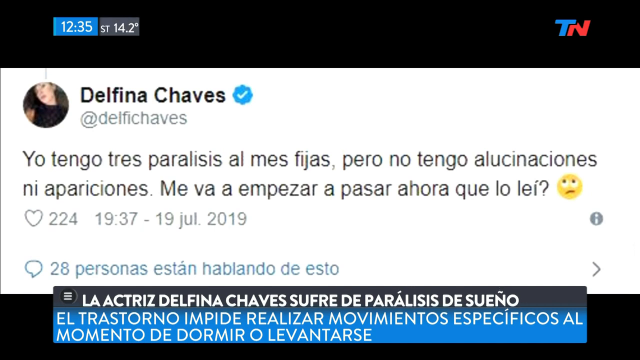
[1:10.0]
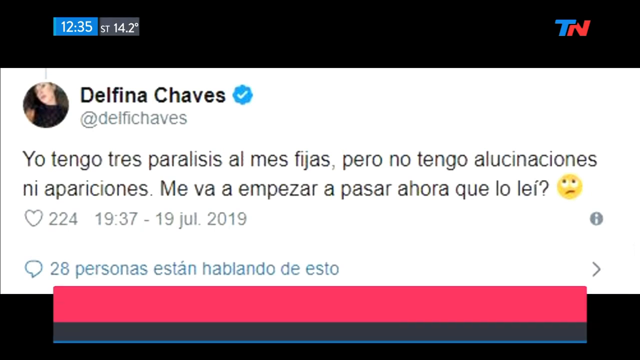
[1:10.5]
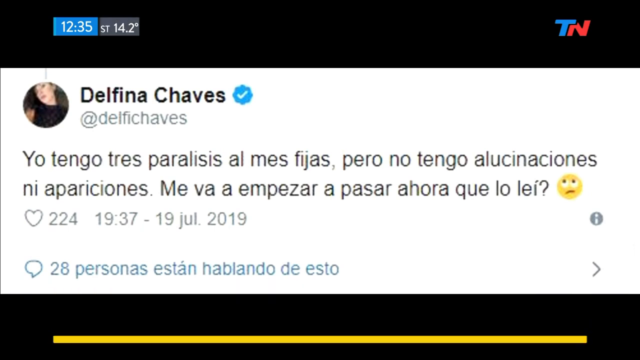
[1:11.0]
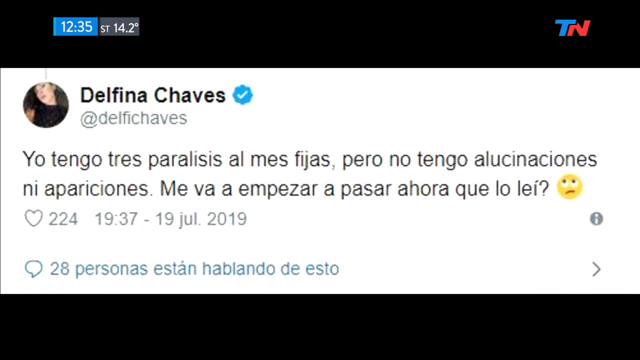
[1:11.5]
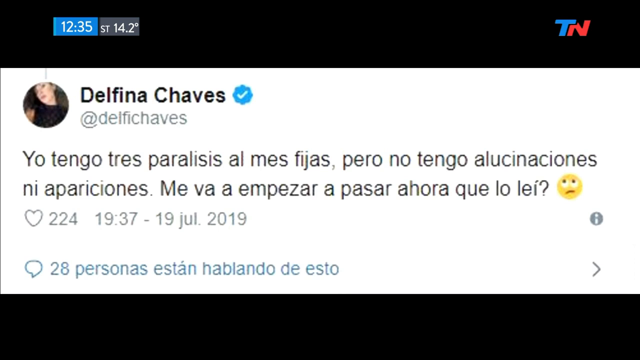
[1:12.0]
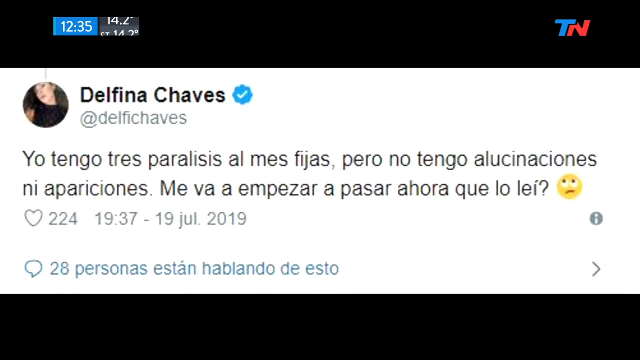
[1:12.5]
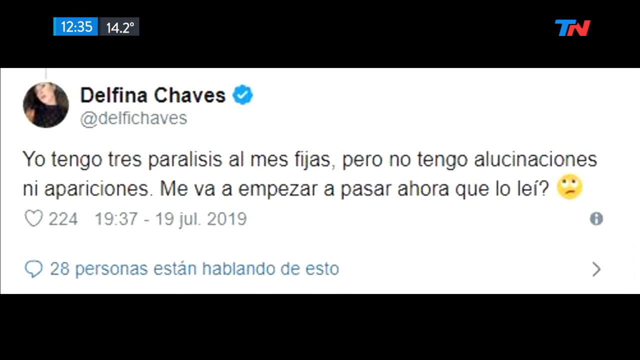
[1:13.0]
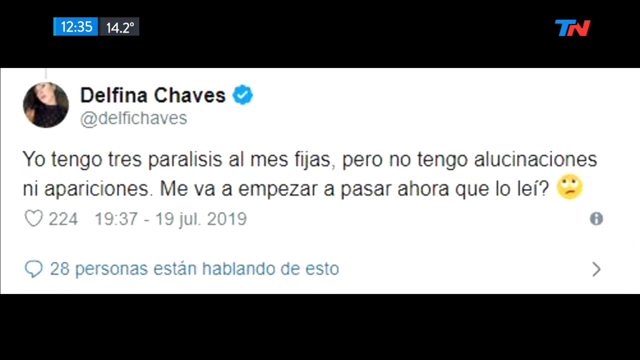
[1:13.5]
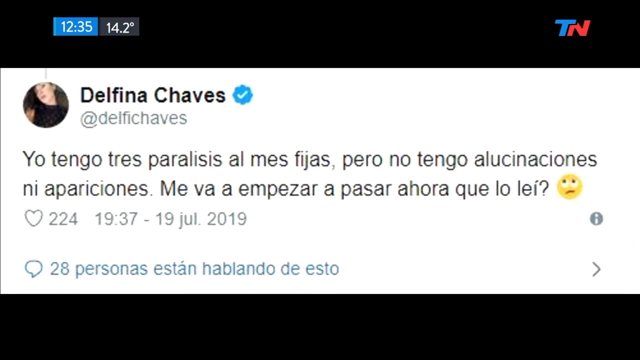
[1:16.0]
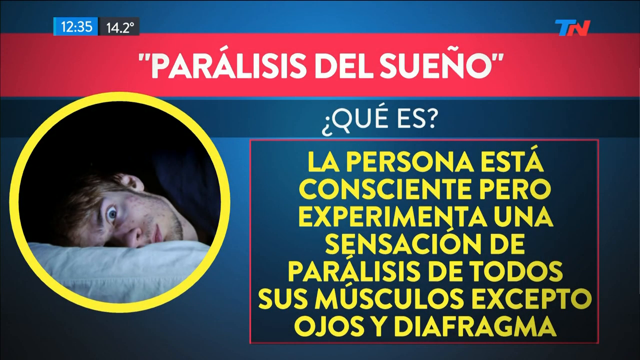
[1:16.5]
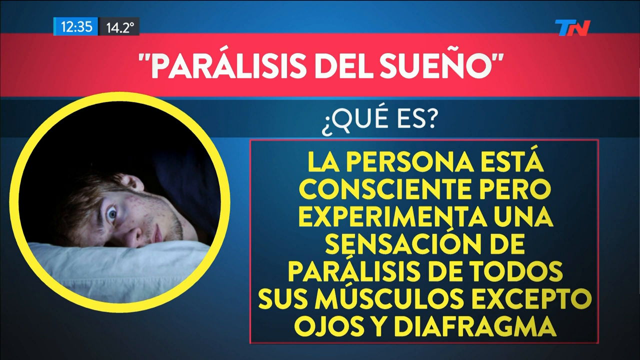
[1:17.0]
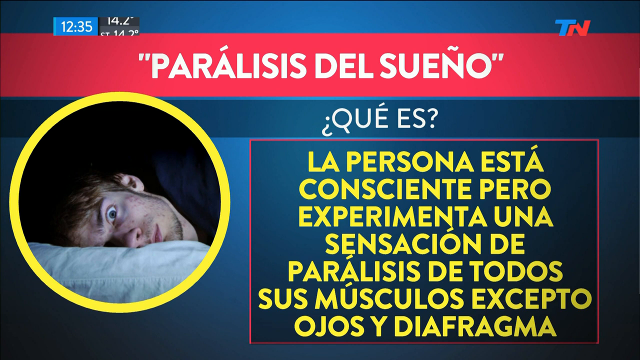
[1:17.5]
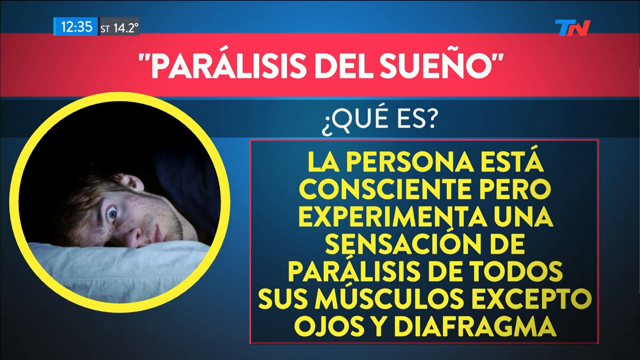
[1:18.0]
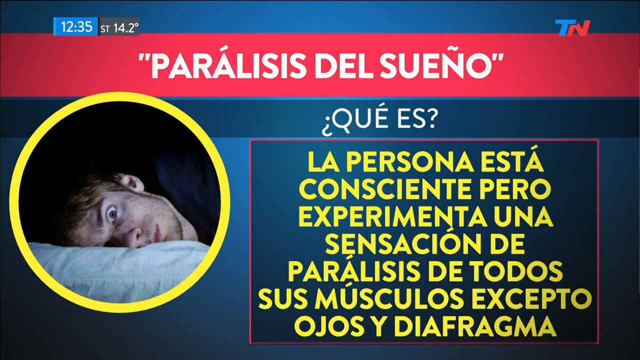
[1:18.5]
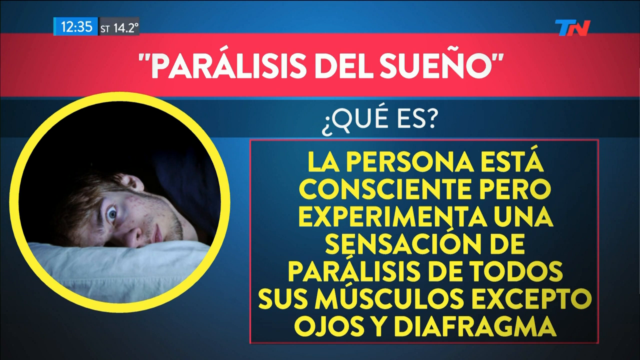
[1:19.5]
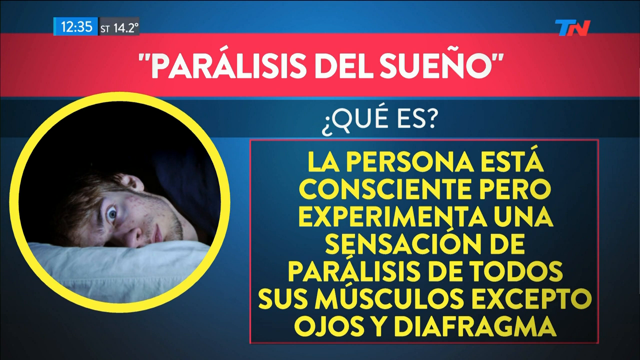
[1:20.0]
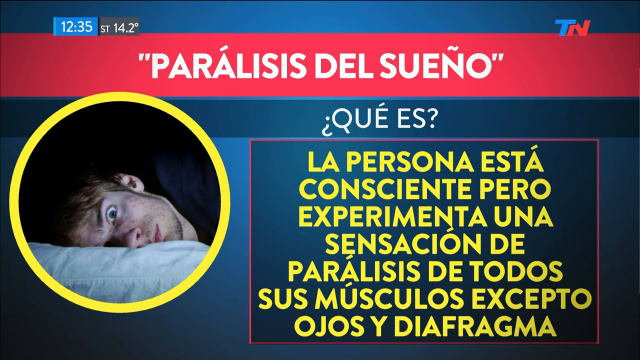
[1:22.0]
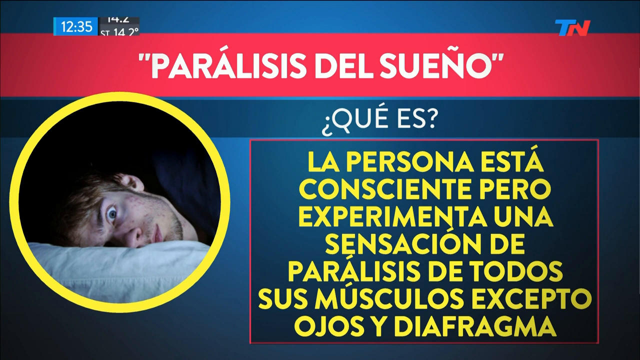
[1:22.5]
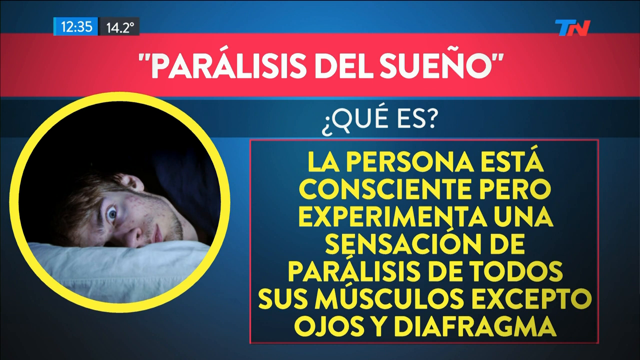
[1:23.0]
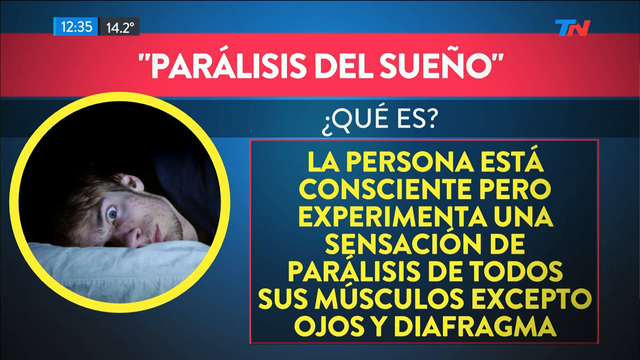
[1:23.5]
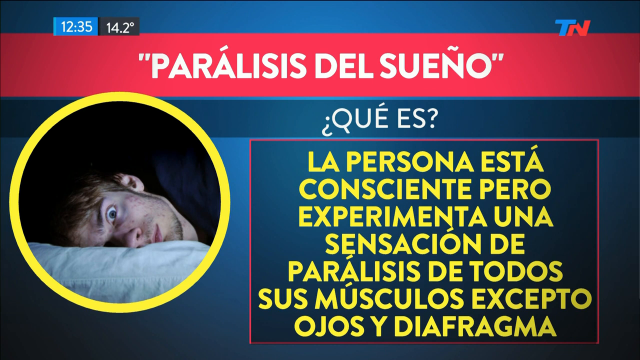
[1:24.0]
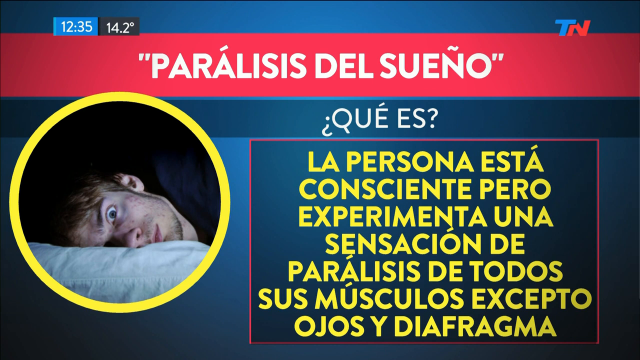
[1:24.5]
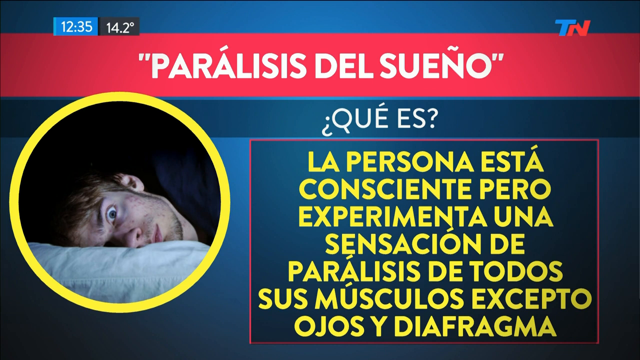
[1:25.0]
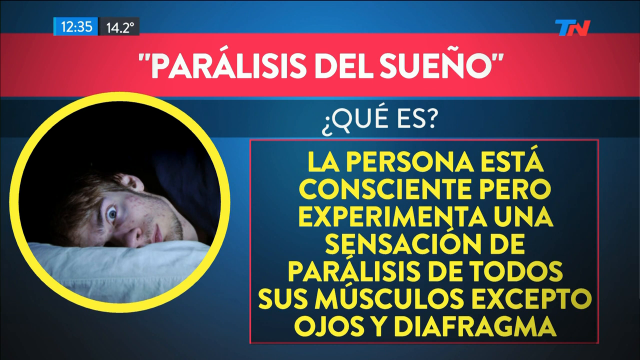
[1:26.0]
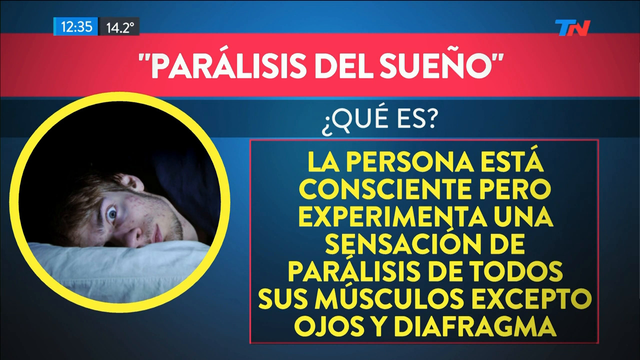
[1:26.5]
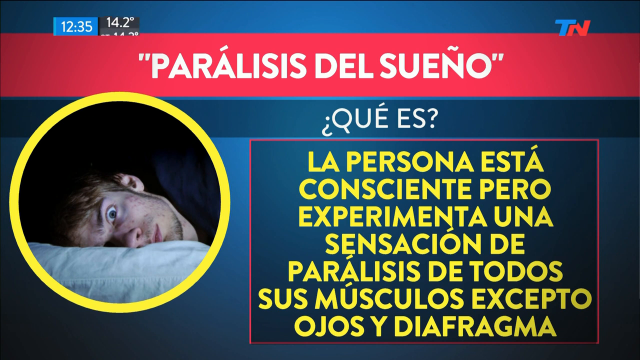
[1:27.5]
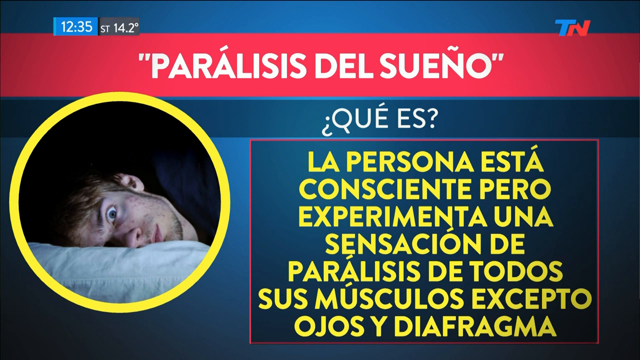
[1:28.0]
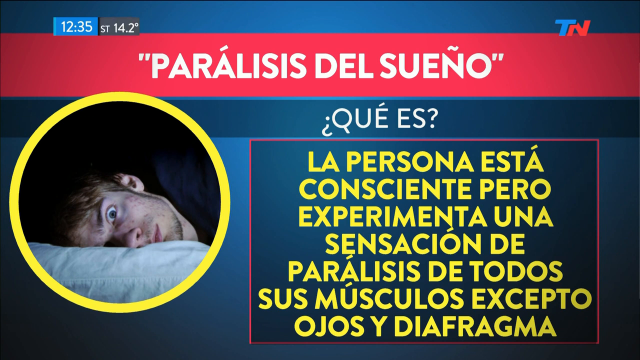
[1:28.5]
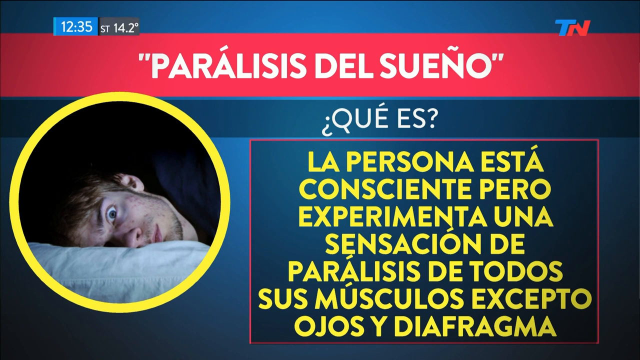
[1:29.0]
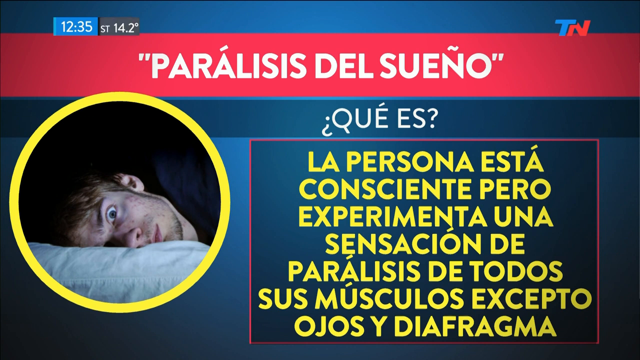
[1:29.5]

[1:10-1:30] A face is shown alongside Spanish text about paralysis, including the words "La persona está conciente pero experimenta una". The face seems to be used as an example of sleep paralysis.